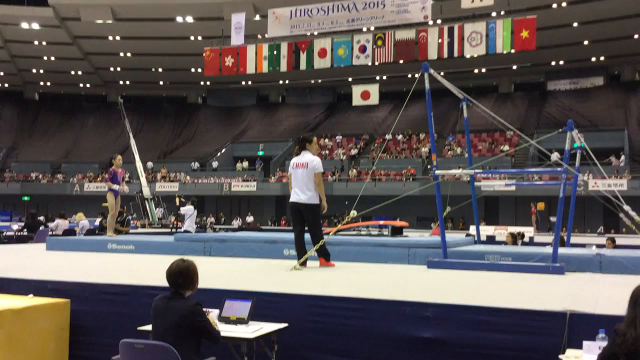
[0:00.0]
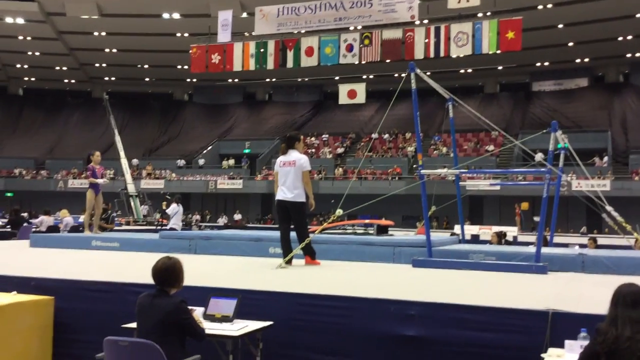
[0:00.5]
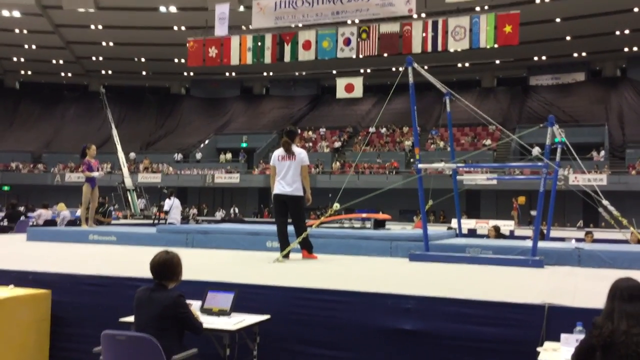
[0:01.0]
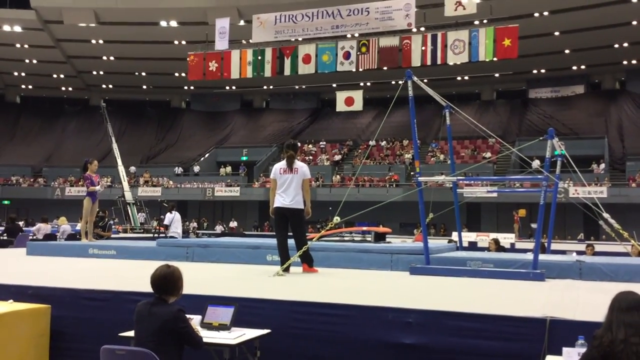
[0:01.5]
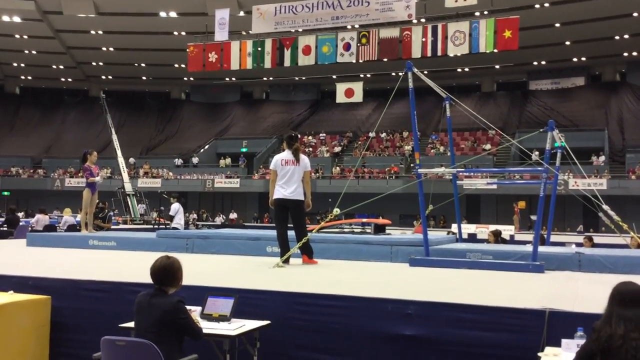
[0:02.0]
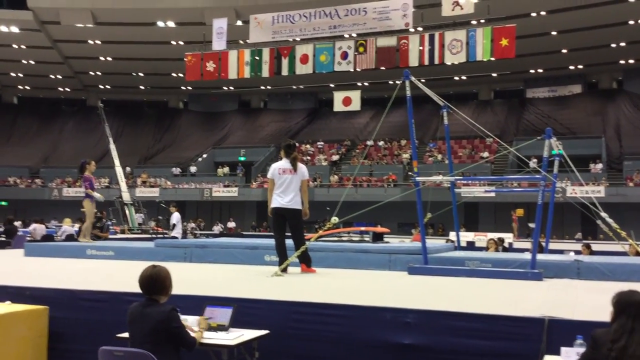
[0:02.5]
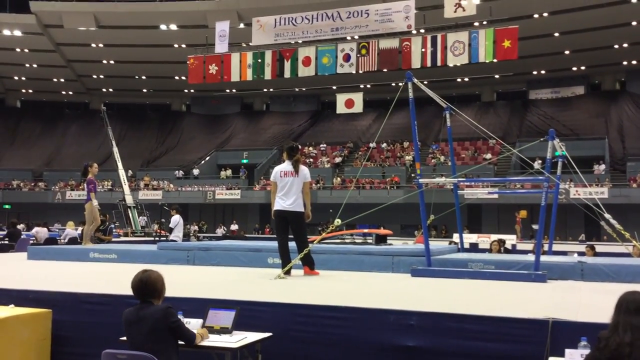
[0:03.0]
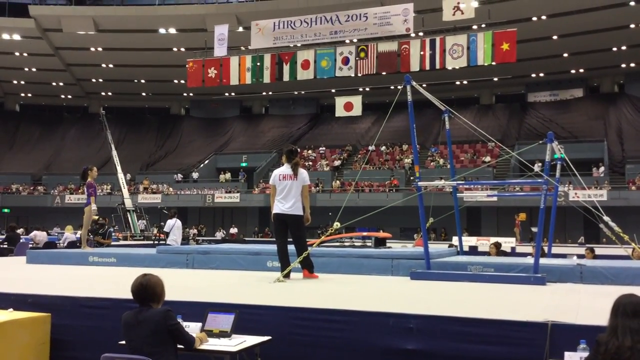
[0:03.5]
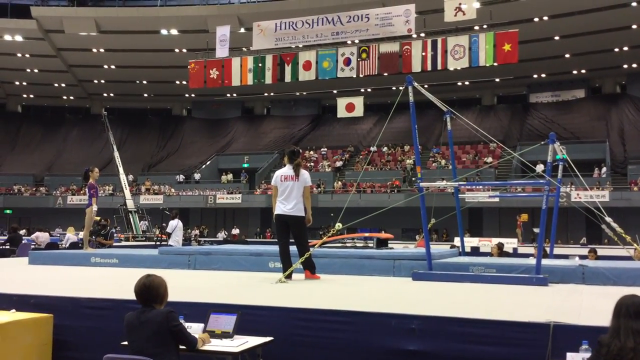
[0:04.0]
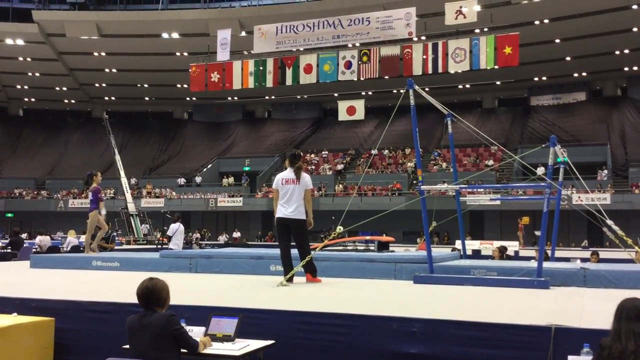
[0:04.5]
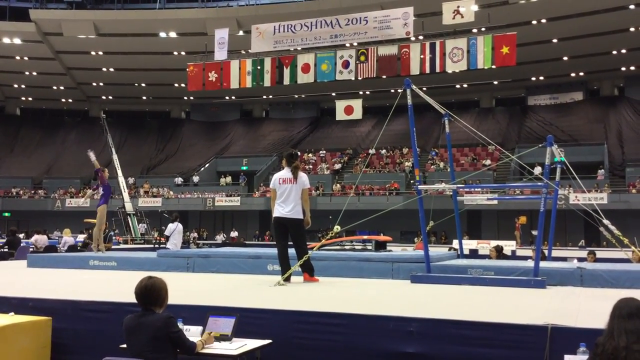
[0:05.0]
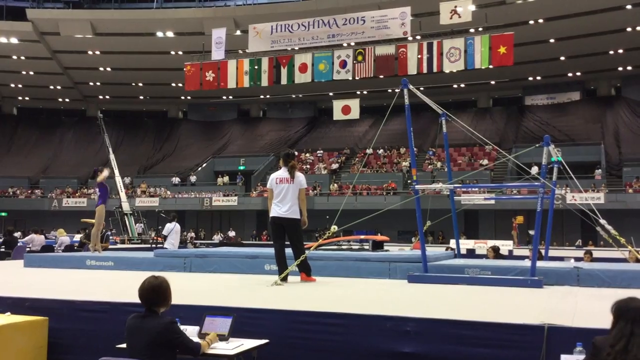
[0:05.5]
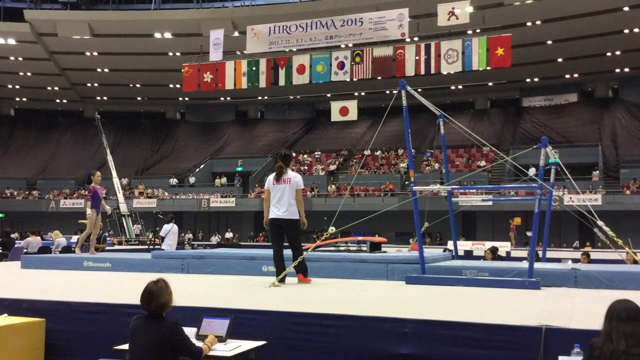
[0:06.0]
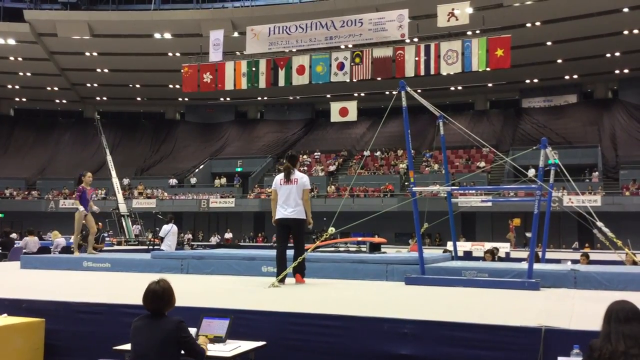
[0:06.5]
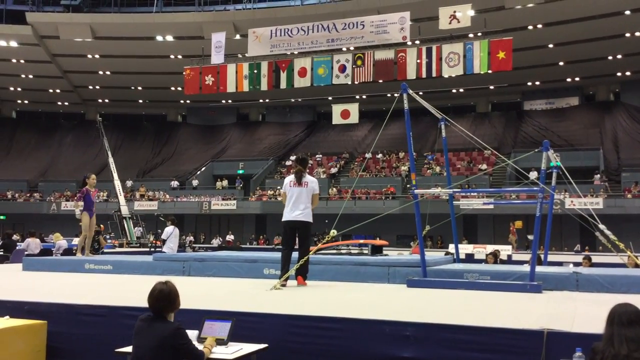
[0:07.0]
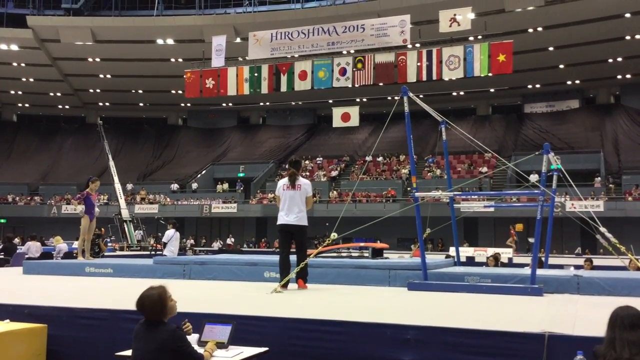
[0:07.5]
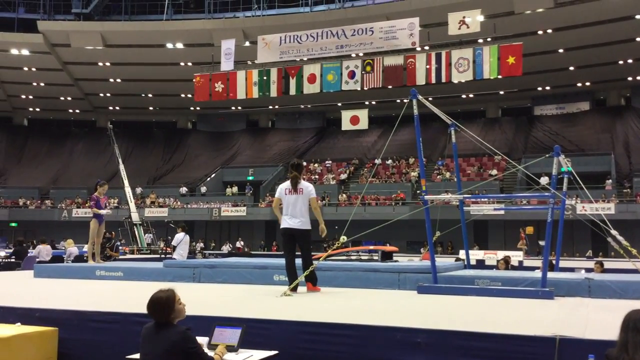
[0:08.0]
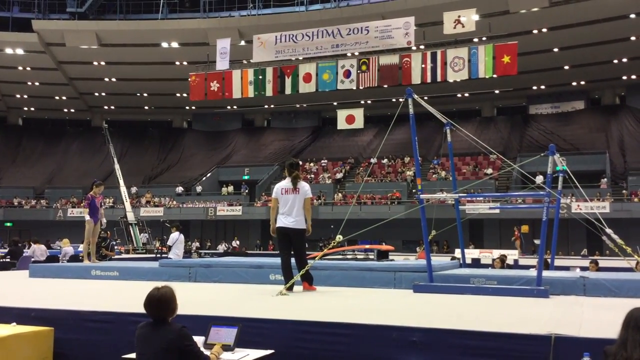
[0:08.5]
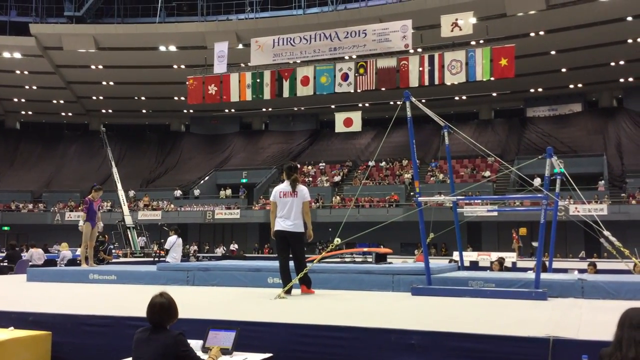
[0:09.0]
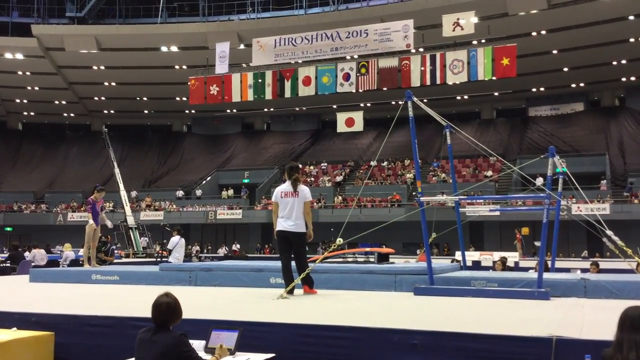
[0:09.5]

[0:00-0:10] A gymnastics event takes place inside a large indoor stadium, with a sign up at the top showing the year; it reads "Hiroshima 2015". A girl is getting ready to run onto the uneven bars, and her coach is sort of spotting her off to the side, roughly in the middle of the frame. Flags hang up towards the ceiling, where there are also lots of lights. The area appears to be raised like a podium, with people lower down towards the lower left-hand corner, and an audience is visible in the upper right area, almost in the middle as well.